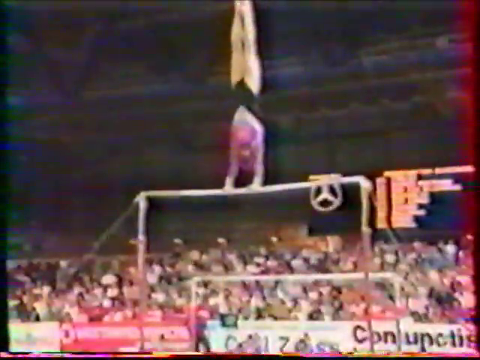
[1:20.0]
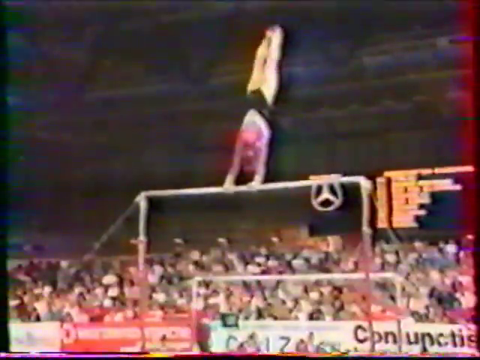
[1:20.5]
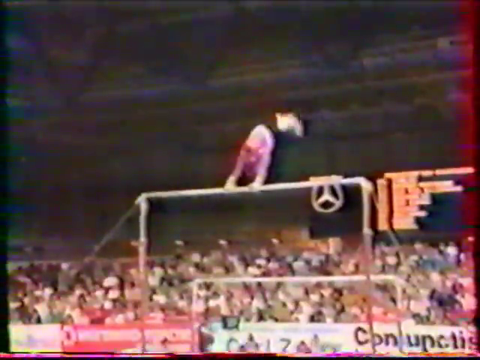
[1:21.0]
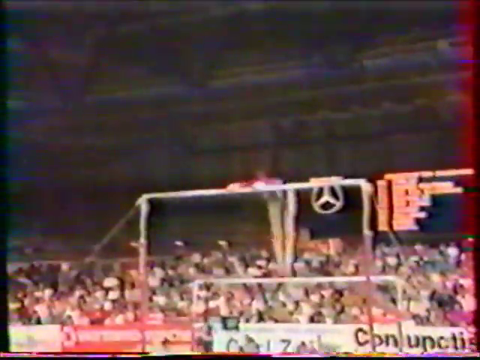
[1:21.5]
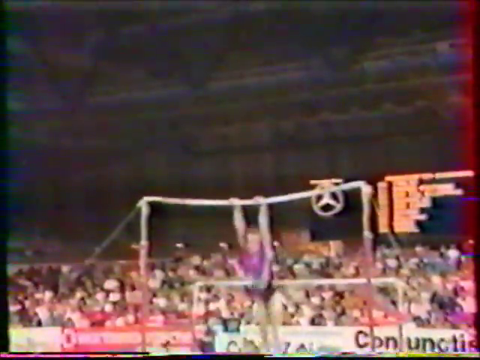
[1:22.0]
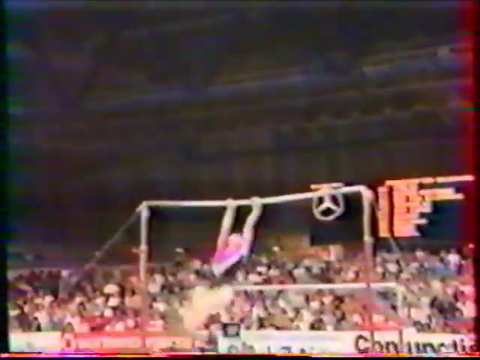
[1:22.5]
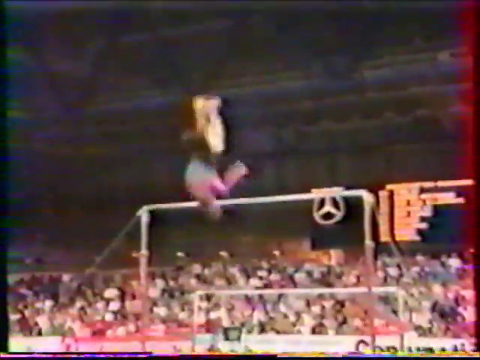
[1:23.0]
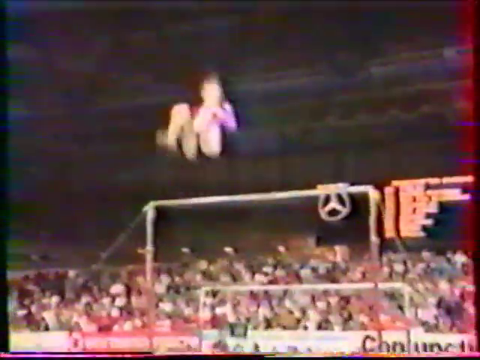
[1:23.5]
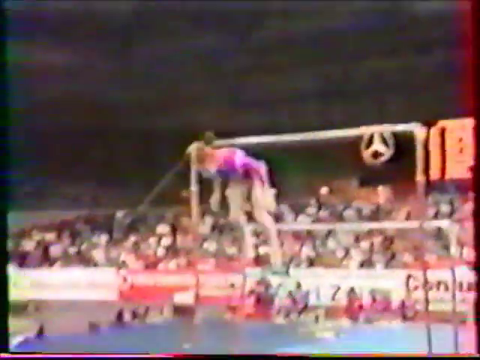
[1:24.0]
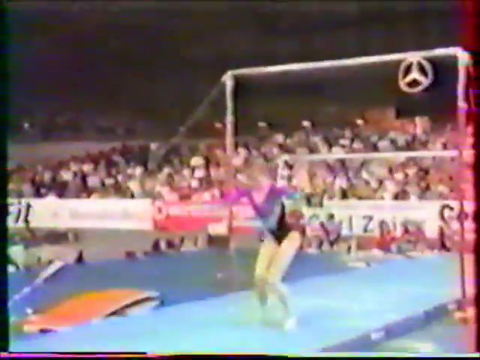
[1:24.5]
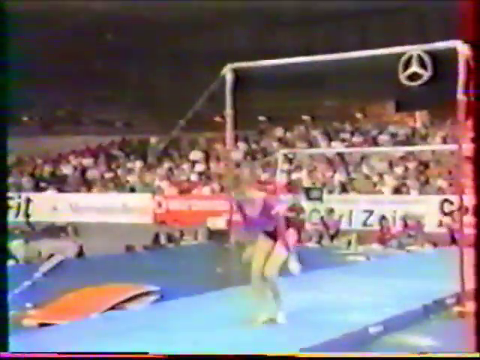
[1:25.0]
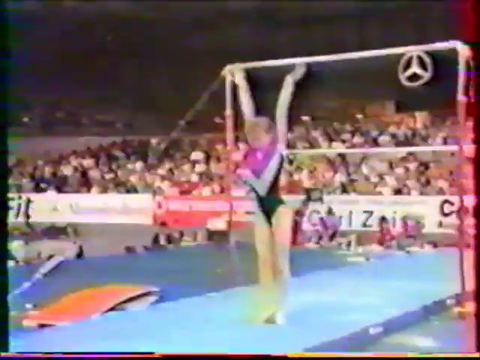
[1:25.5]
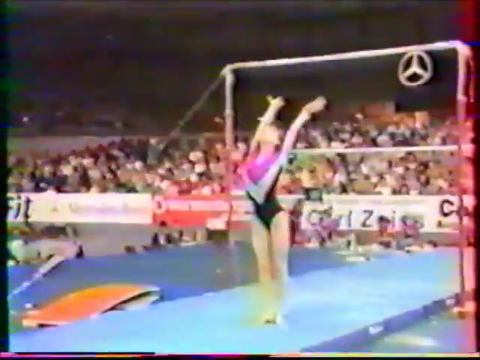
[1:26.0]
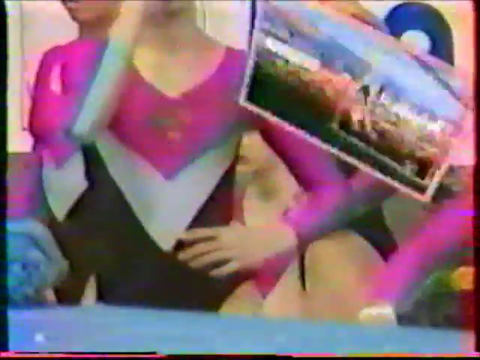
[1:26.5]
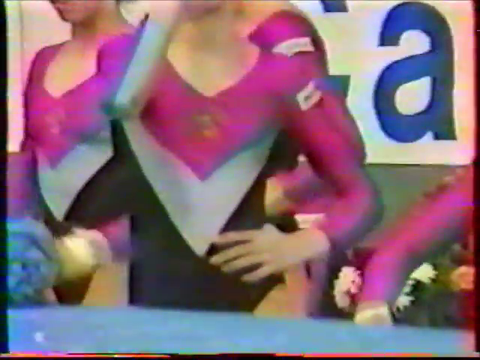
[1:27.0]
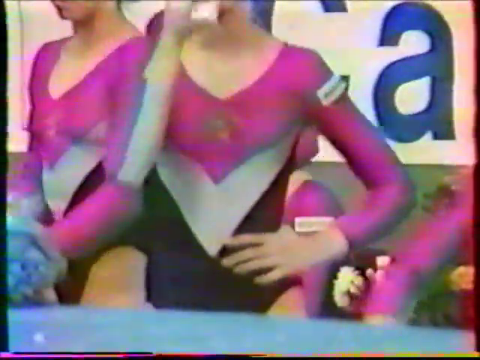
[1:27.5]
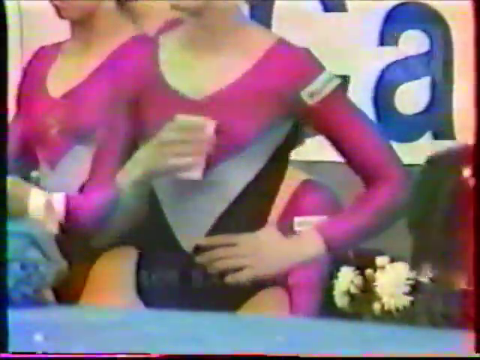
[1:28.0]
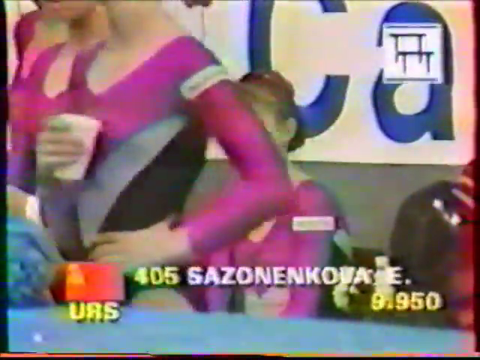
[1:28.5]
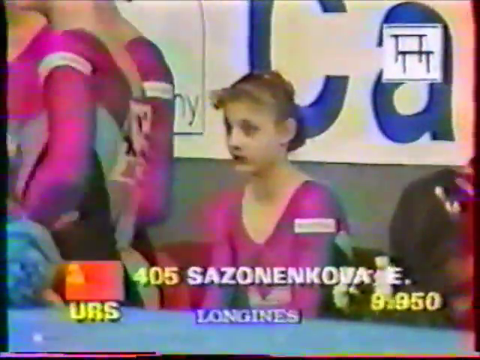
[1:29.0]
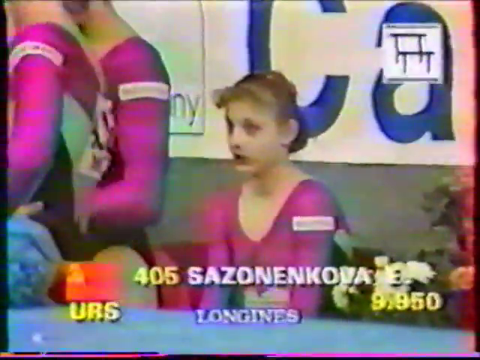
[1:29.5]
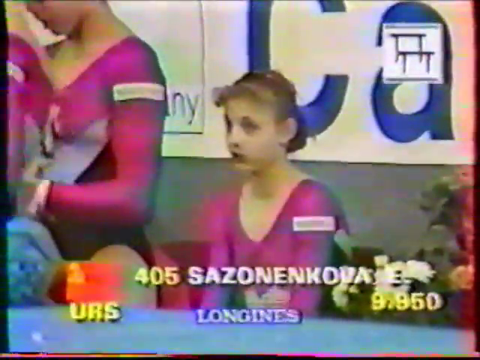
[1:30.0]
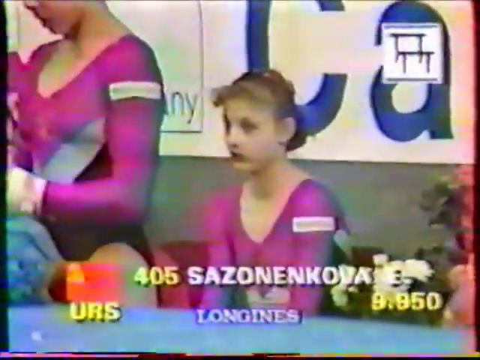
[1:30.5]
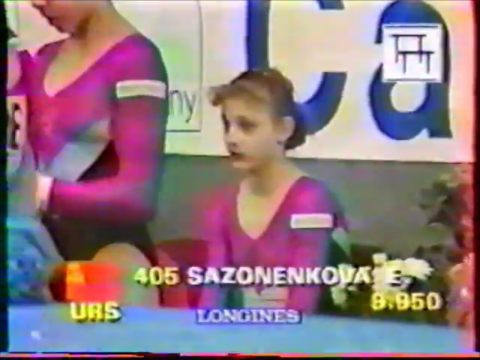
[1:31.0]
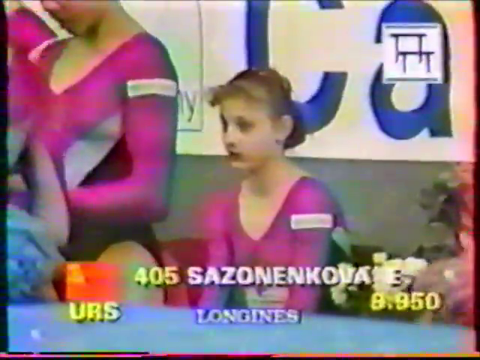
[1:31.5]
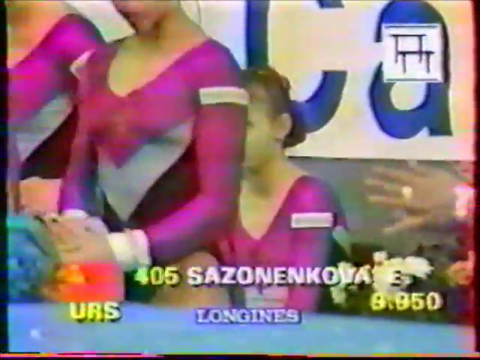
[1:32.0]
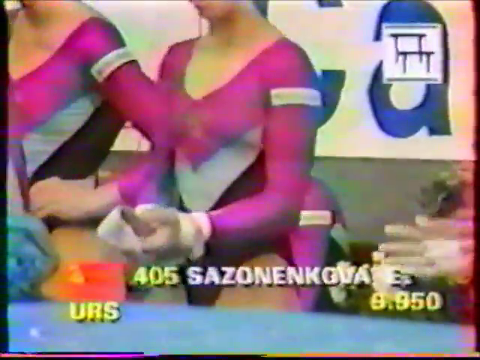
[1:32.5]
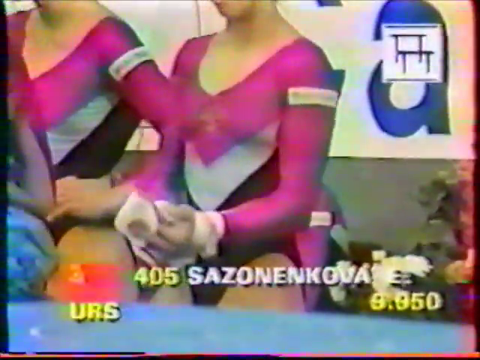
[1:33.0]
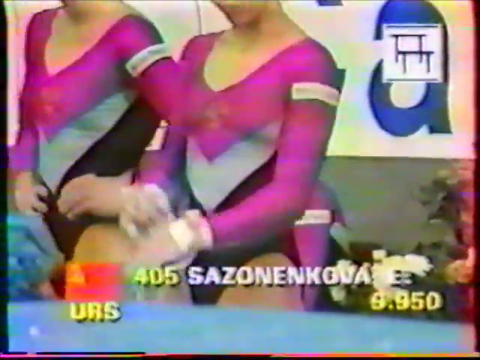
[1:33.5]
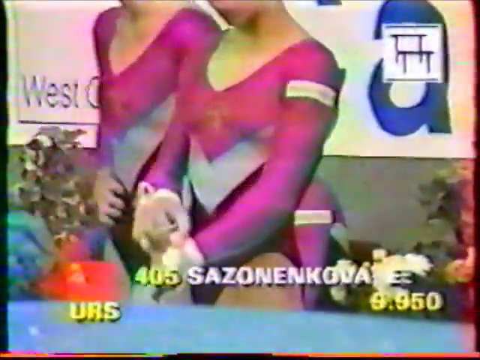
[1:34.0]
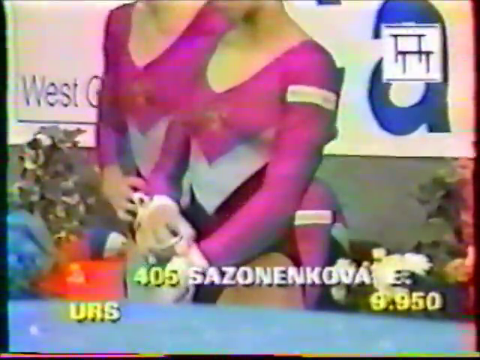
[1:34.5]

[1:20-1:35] In the background, just under halfway up on the right side of the screen, is a scoreboard showing lines of orange-looking text on a black screen, with the Mercedes logo on the far side of the black screen. Below it are busy crowd scenes. On the higher of the two parallel bars, the gymnast is in a vertical position with her toes pointing to the sky and both hands gripping the bar below her. She drops, turning her body into a V-shape with her toes pointing toward the ground while her back is still diagonal, pointing toward the right corner of the screen. She then turns, drops below the bar to vertical and dismounts, somersaulting in the air. The view goes to the team area, where her teammates are milling about; one holds a cup in front of her with her right hand while her left arm is bent at the elbow beside her, possibly on her hip. Her score, 9.950, comes up to the right of her name, and she seems to blow air out in relief.